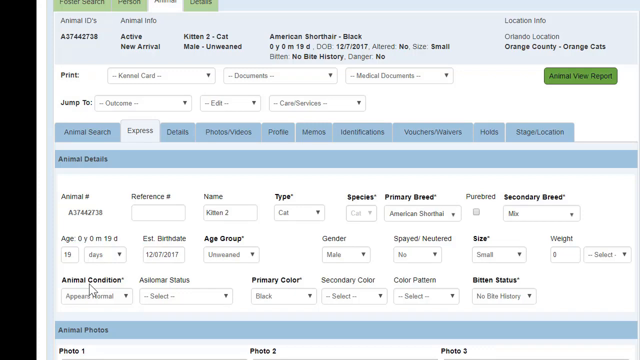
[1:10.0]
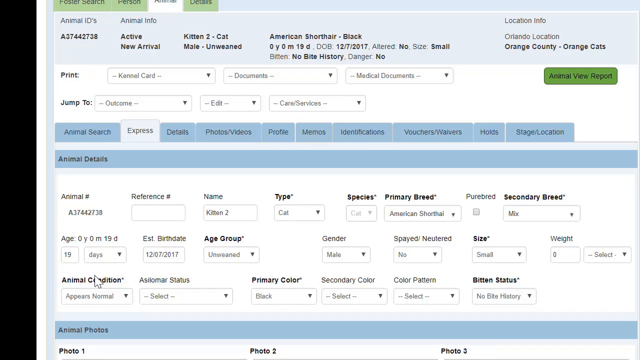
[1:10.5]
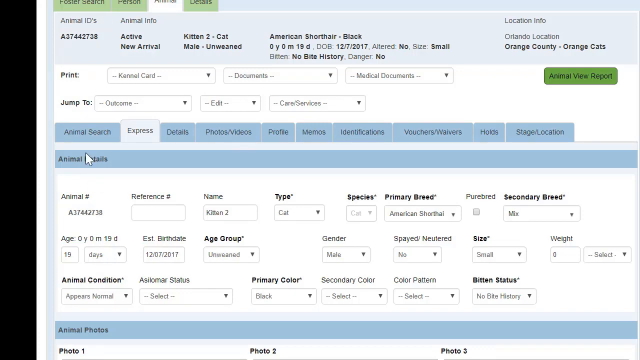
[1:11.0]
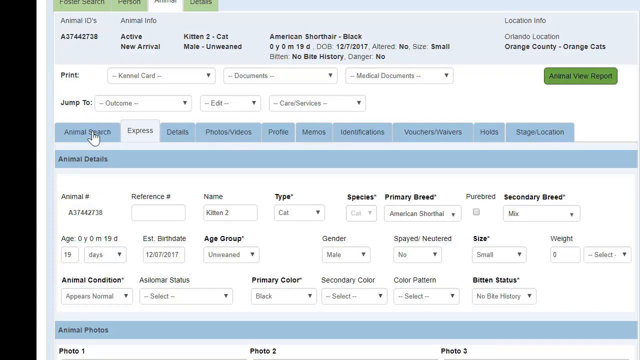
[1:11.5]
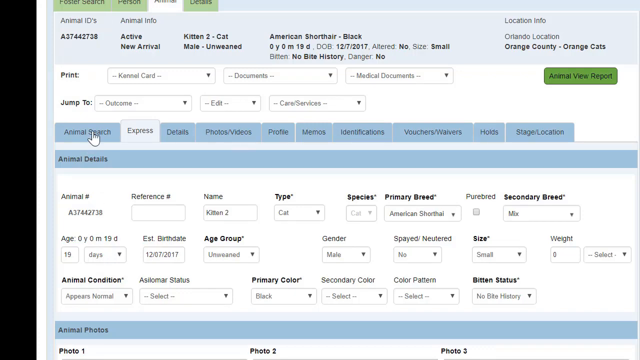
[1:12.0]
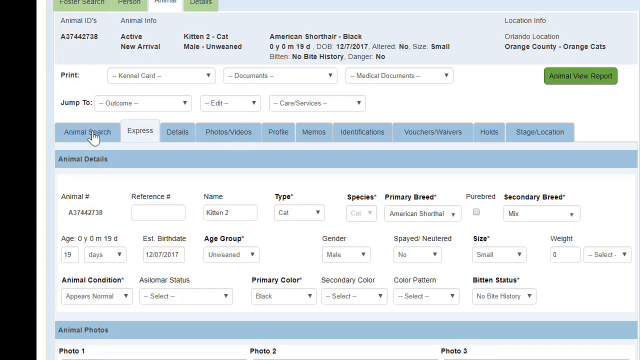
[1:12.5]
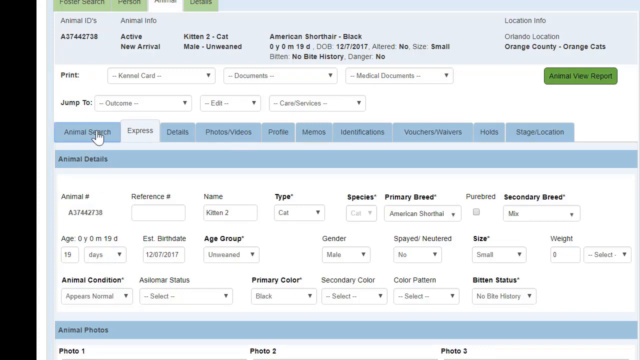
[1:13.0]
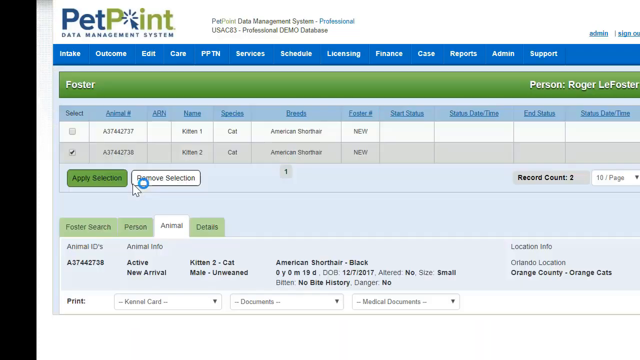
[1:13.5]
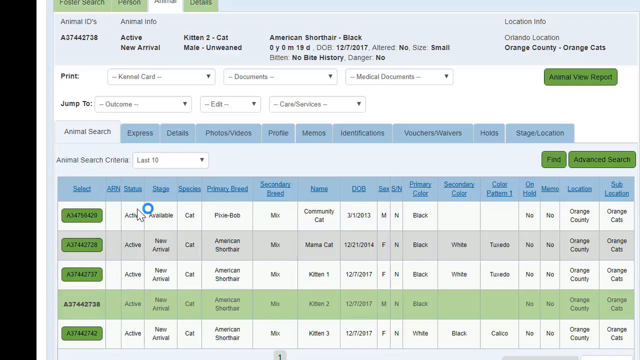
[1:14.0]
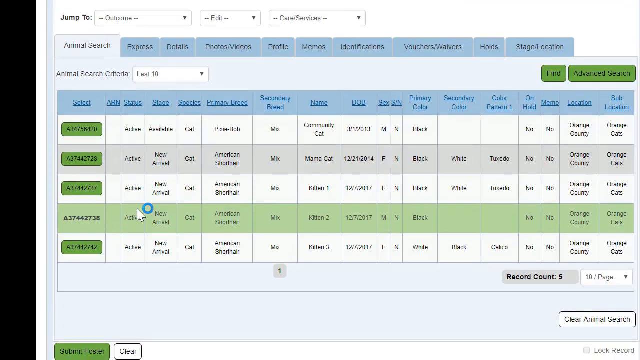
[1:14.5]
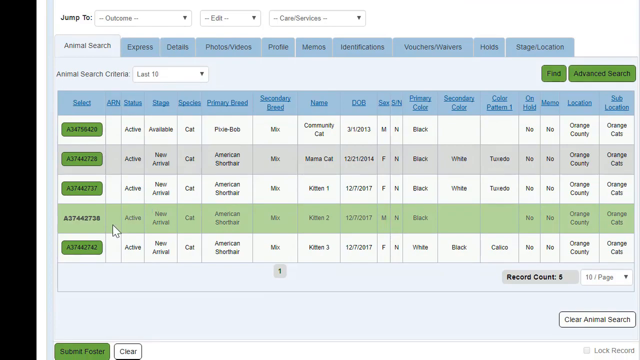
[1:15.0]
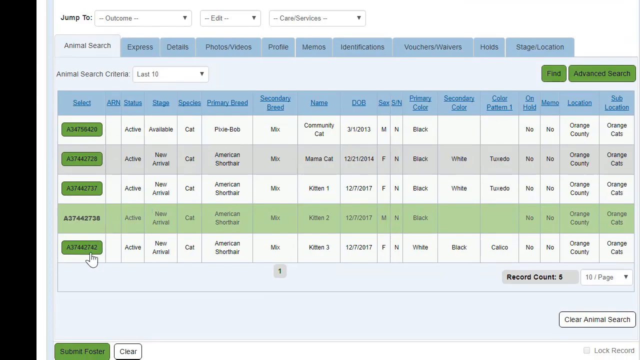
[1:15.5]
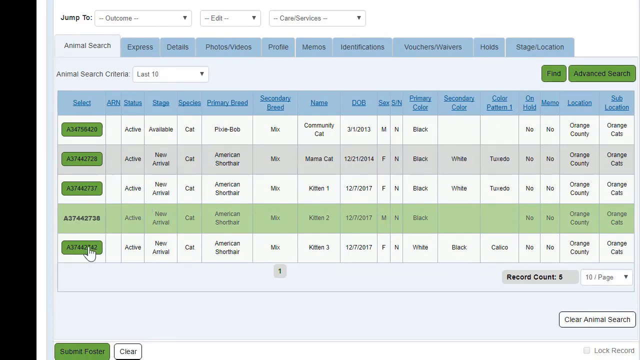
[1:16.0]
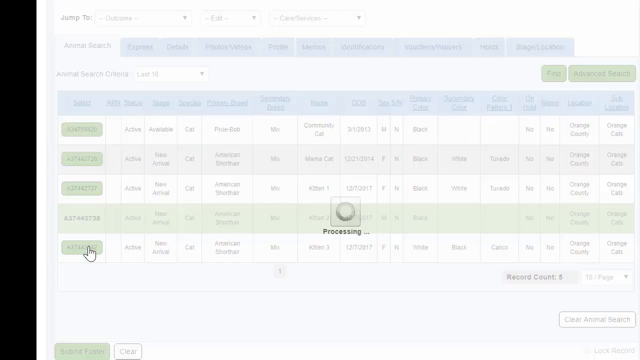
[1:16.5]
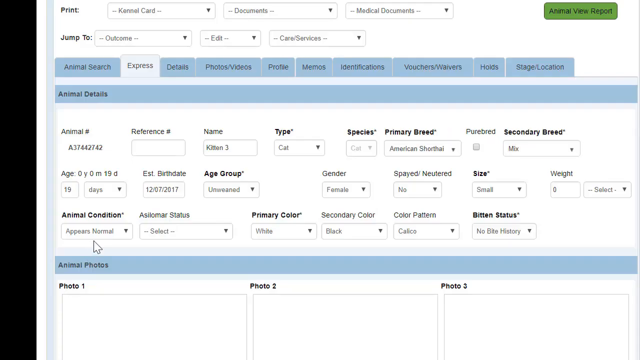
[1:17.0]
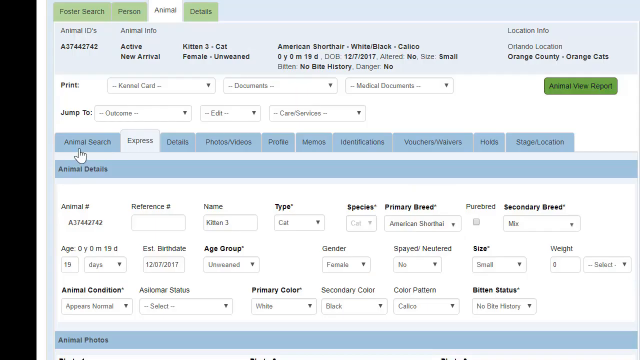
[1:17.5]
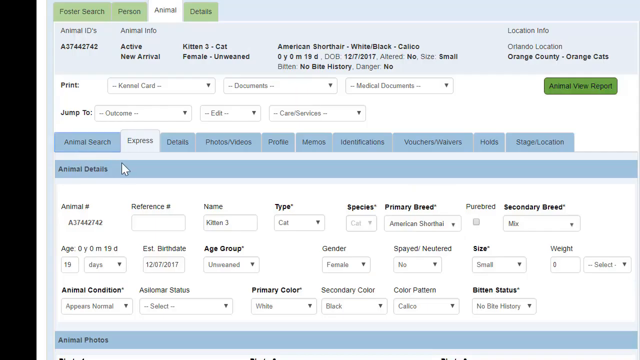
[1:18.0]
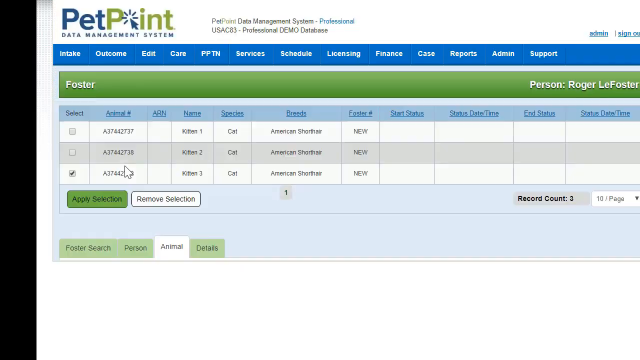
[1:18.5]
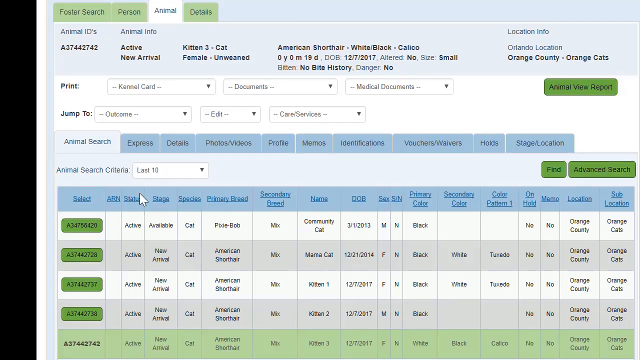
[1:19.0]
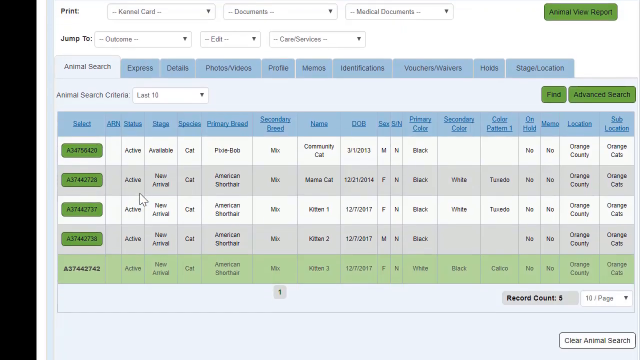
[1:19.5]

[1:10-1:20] A webpage shows information on an animal with the ID A37442738, which is a cat. The user's cursor goes down to the animal search tab about halfway down the page and clicks it, loading a new page with two results for different animals. A chart shows check boxes on the left for each animal, their ID number, name, species, breed and foster number, followed by empty boxes for start status, status date and time, end status, and status date and time. The user scrolls down to a chart for the animal search criteria and clicks the last option, with the ID number A37442742, which loads that animal's profile page. The user goes down and clicks the animal search button again, bringing back the results, and in the chart this result has been added to the previous two. The user then scrolls down to the animal search criteria chart with its five options.